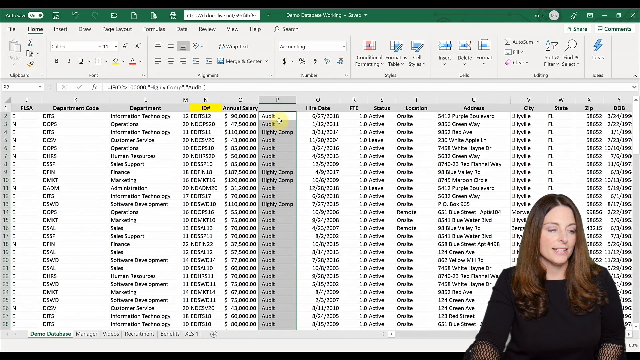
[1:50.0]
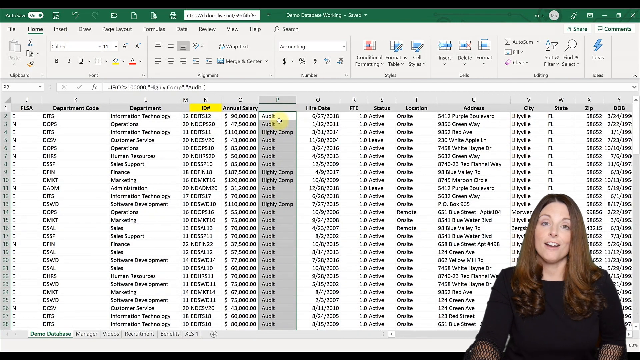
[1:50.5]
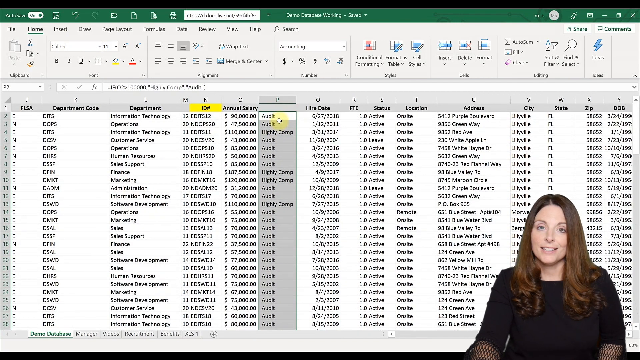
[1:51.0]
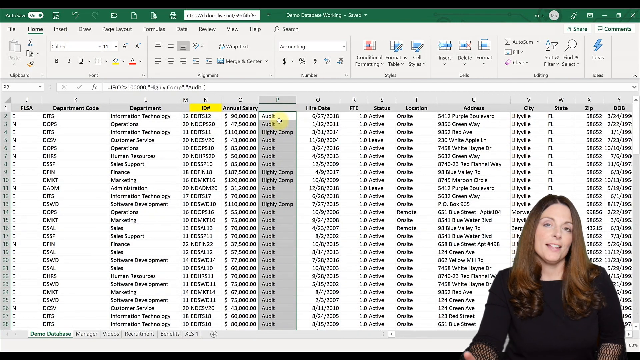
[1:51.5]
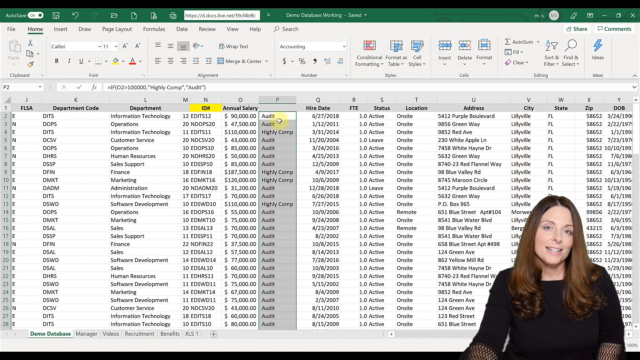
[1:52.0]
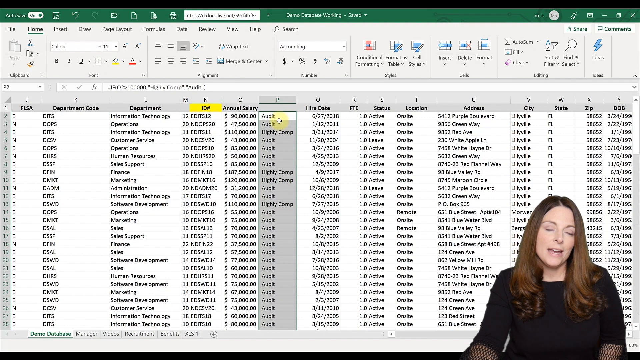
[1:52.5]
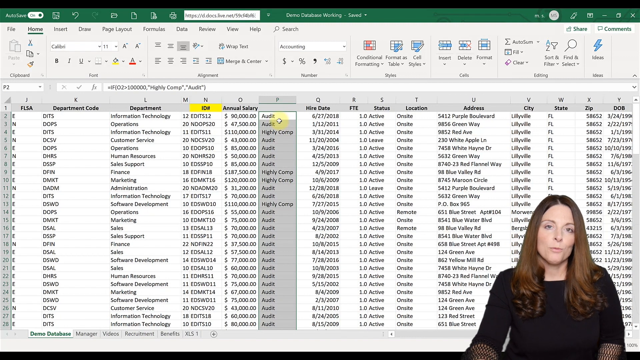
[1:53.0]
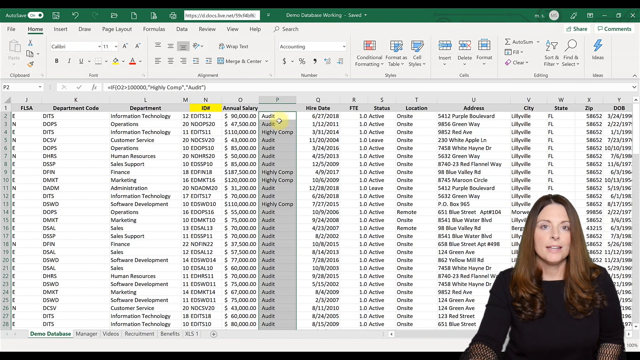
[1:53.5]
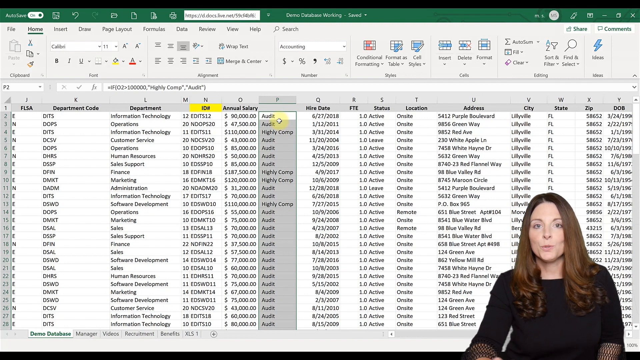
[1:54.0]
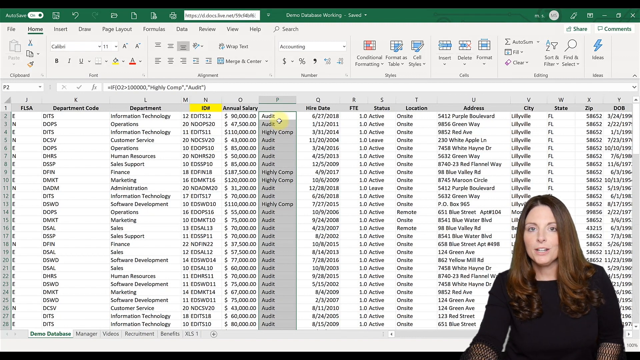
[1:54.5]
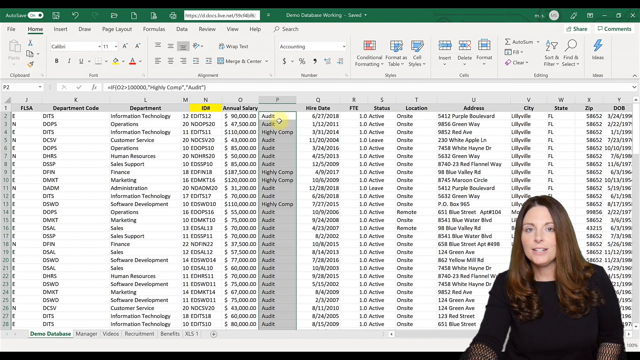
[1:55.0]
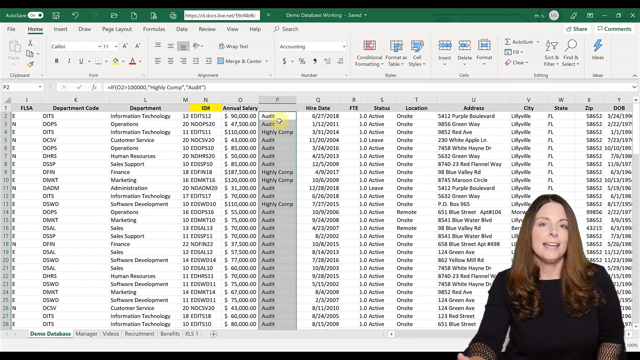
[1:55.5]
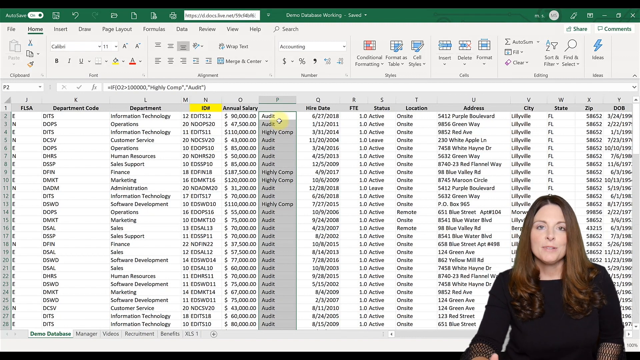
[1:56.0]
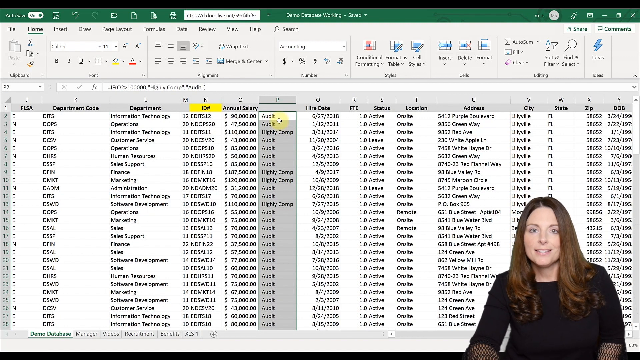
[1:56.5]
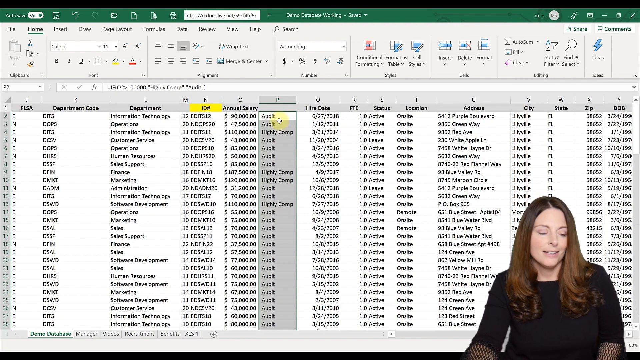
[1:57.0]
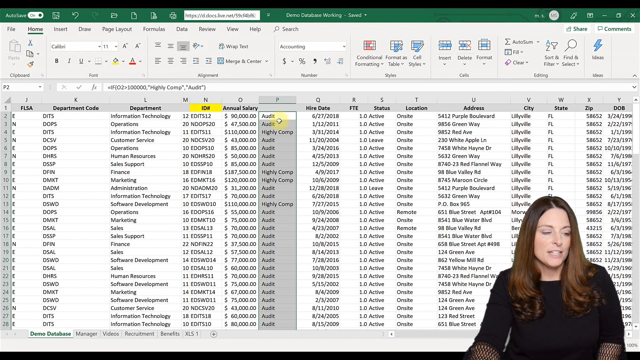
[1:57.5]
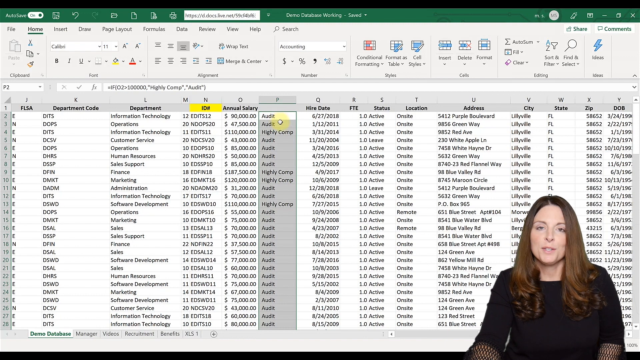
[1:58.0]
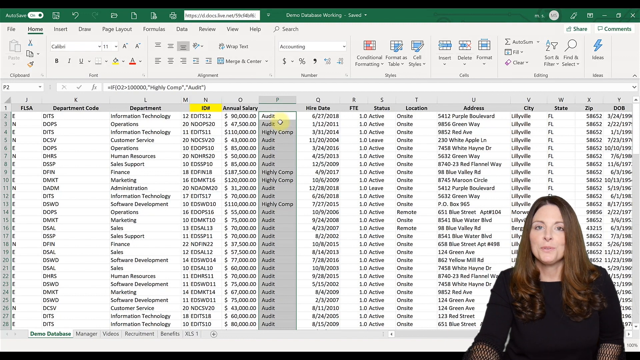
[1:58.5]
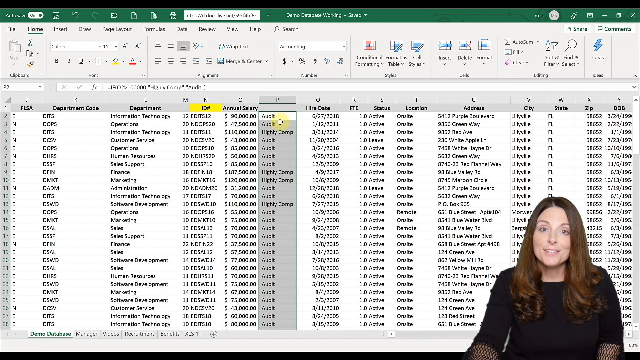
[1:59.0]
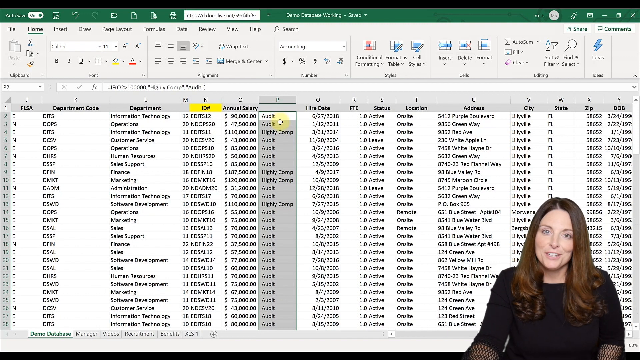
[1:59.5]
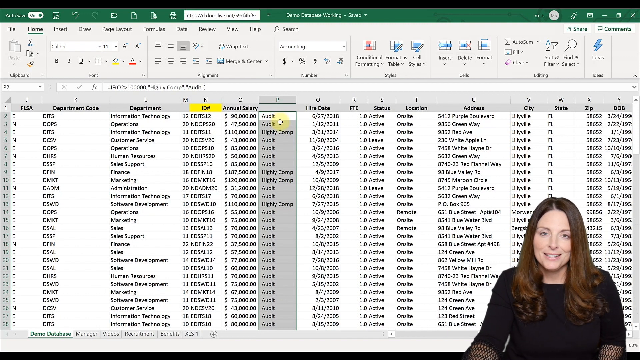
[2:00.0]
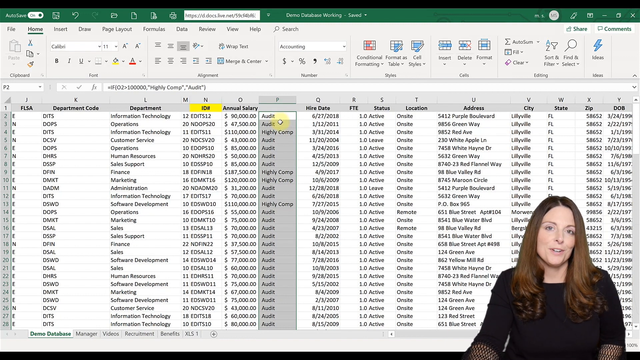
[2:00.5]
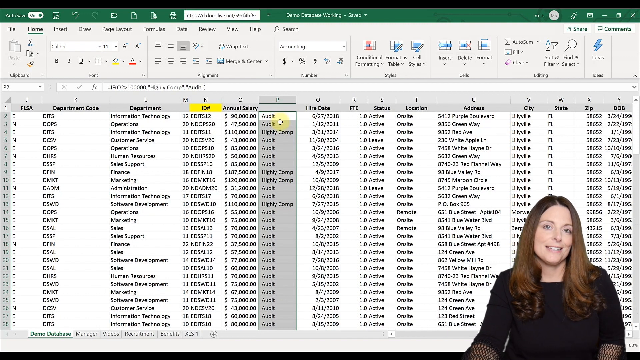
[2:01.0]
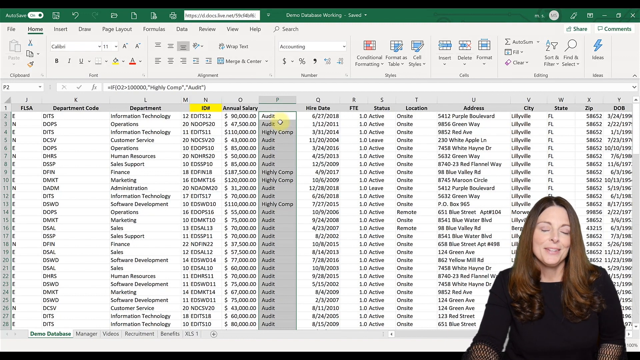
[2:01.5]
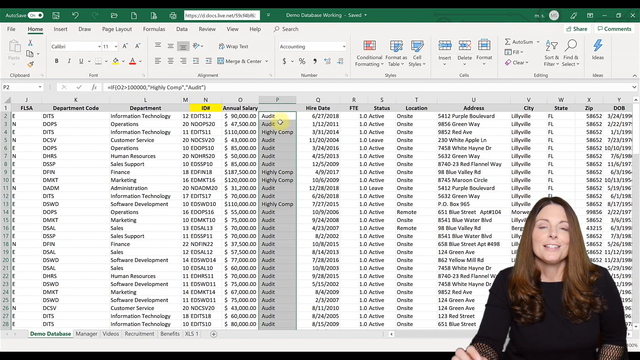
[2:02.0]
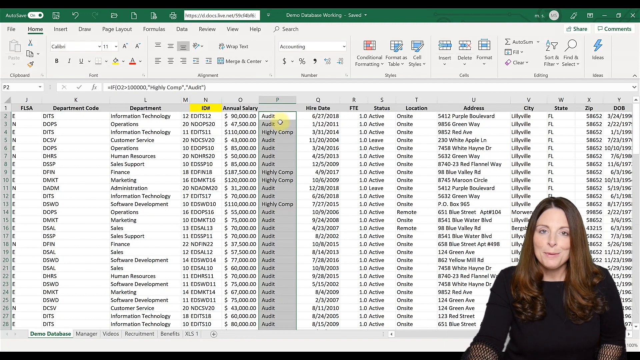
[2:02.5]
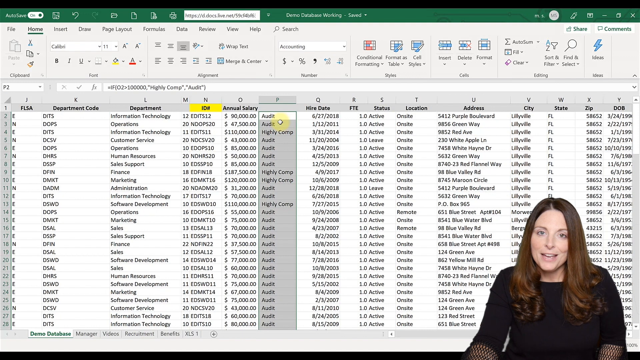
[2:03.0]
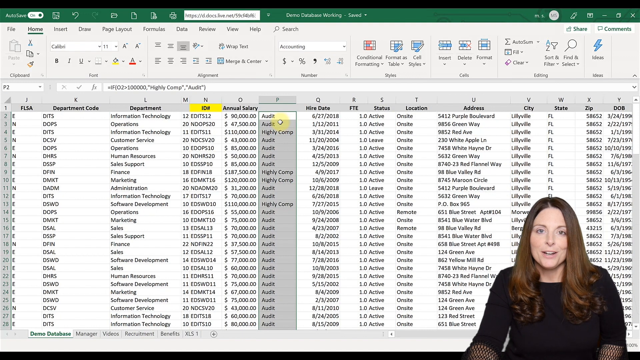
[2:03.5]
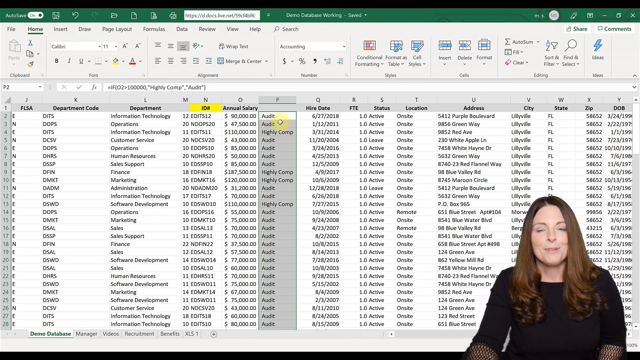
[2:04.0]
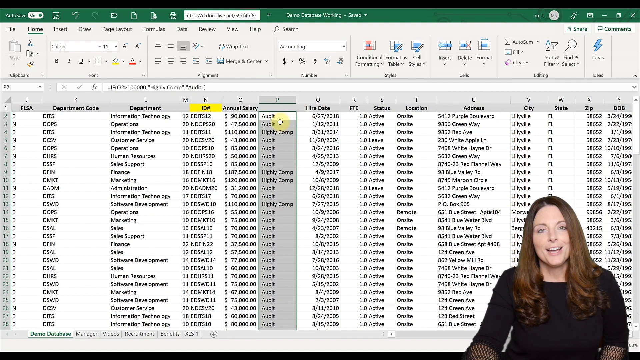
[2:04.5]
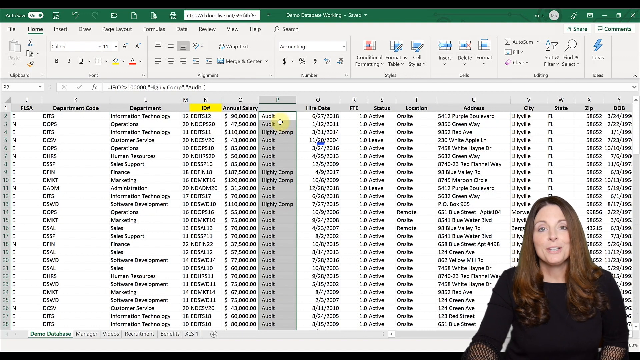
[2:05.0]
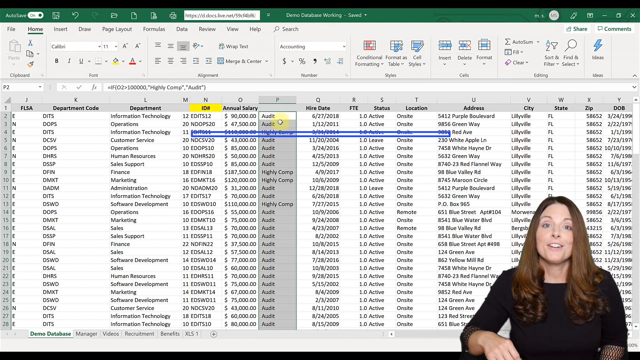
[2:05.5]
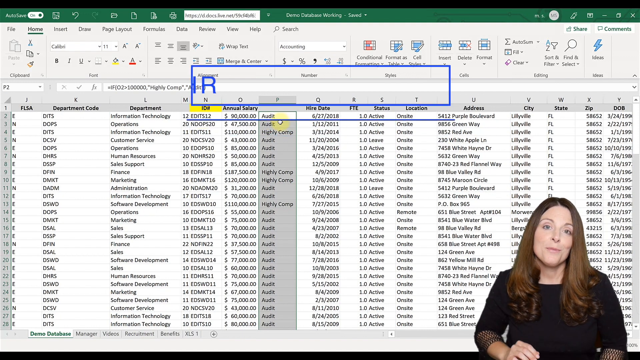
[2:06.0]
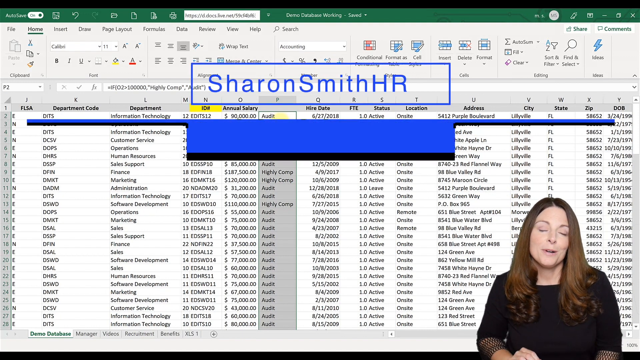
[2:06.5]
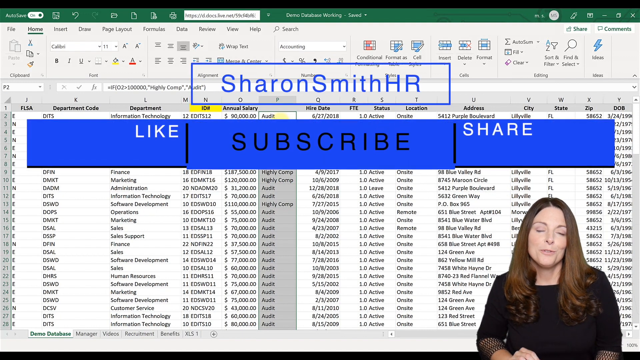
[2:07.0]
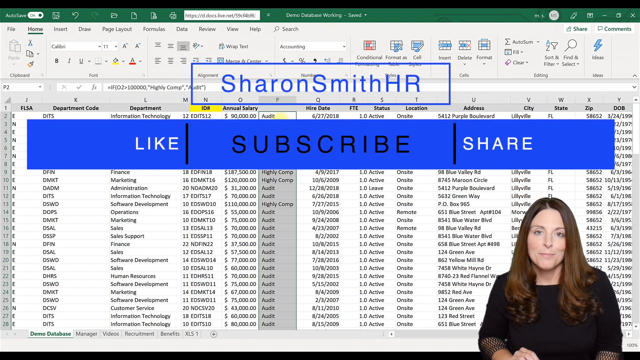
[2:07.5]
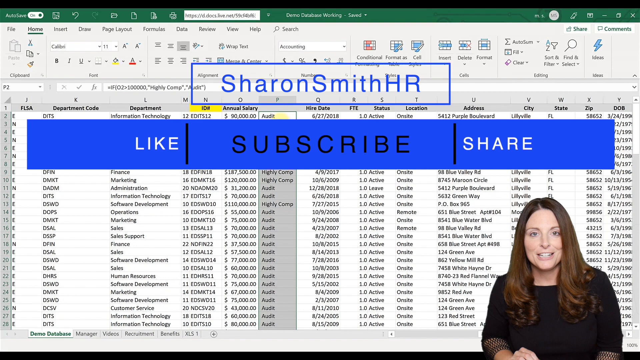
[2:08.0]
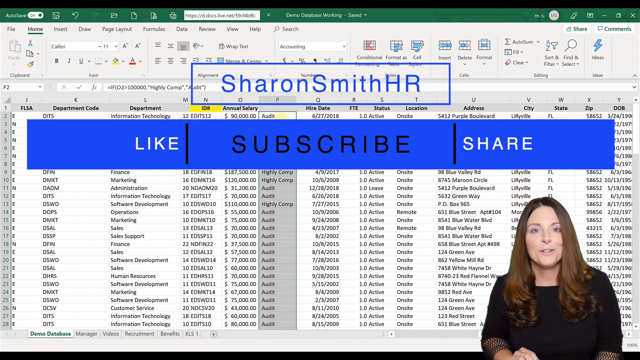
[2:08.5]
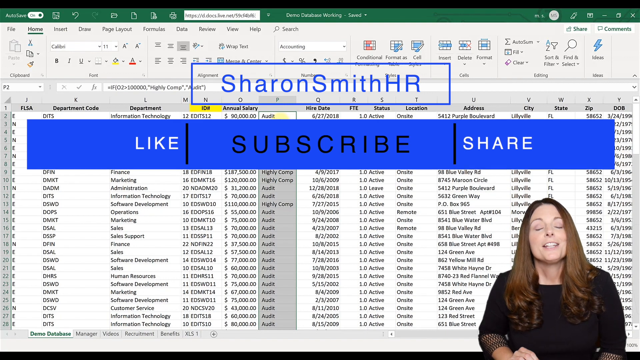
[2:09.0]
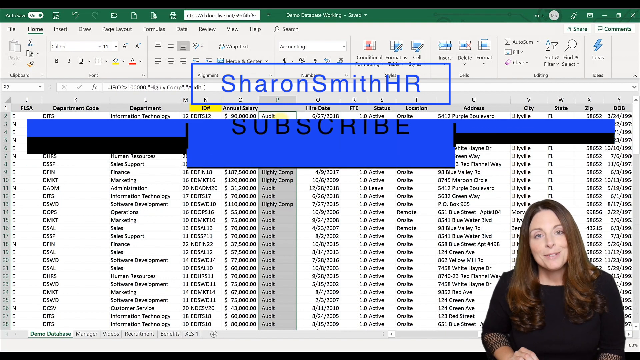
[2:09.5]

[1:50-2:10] An Excel spreadsheet full of numbers, names and dates is on screen, with a woman on the right talking about it. She is Caucasian, in her upper 20s, with brown hair and a black shirt. Column P is highlighted in gray, while column O, annual salary, and column Q, hire date, are not highlighted. She moves the cursor, which stays up at the second row of column P, and talks while looking at the camera, smiling. Her name, "Sharon Smith HR", then appears as an overlay in blue, with "like, subscribe and share" below it, as she continues to talk to the camera.